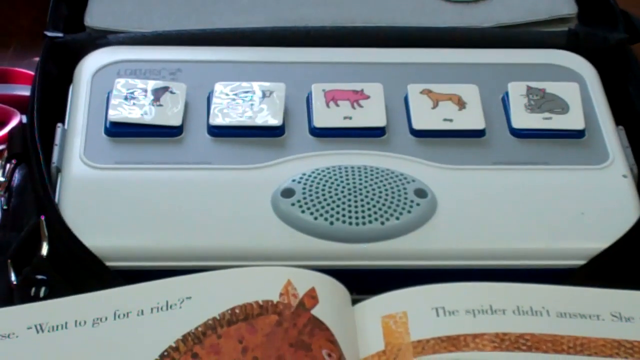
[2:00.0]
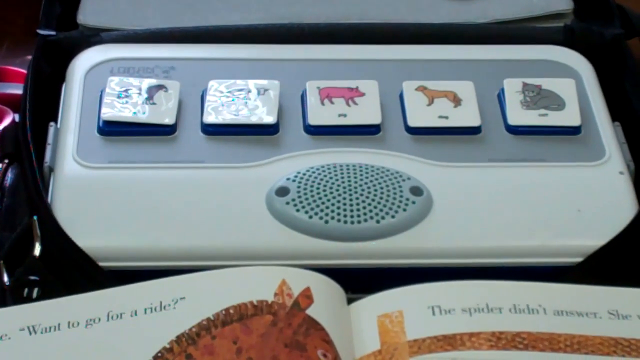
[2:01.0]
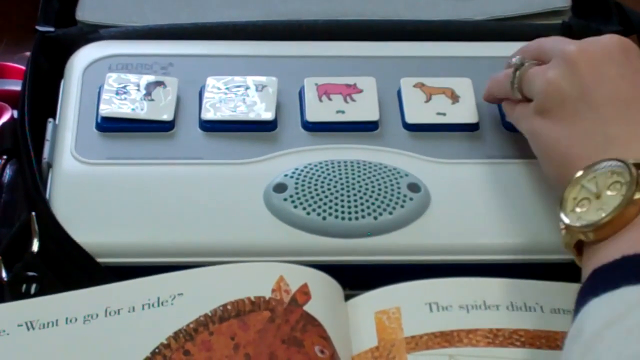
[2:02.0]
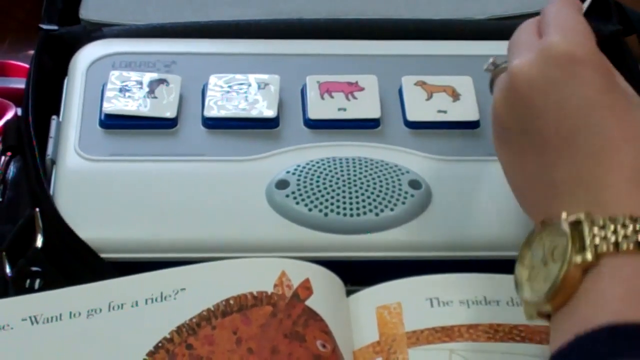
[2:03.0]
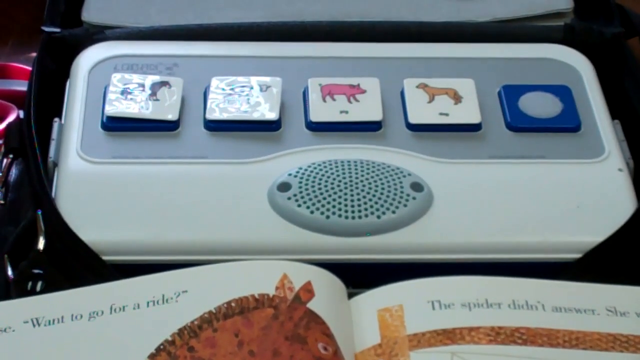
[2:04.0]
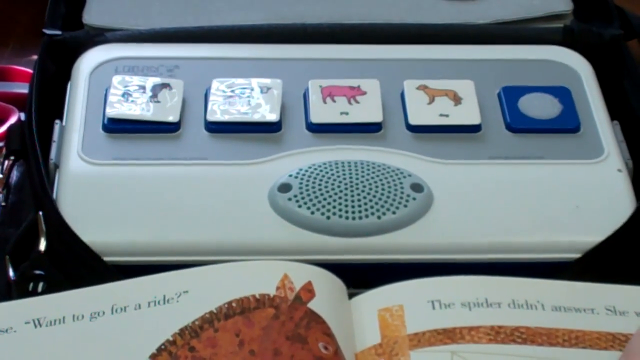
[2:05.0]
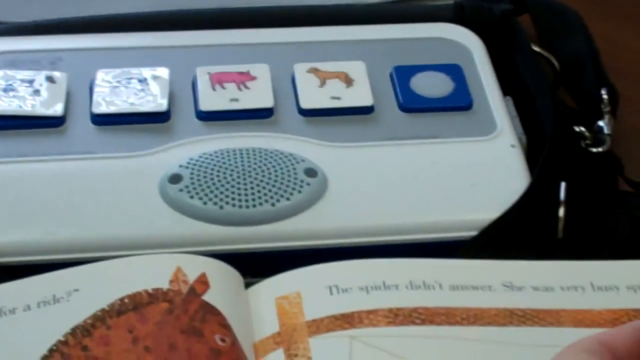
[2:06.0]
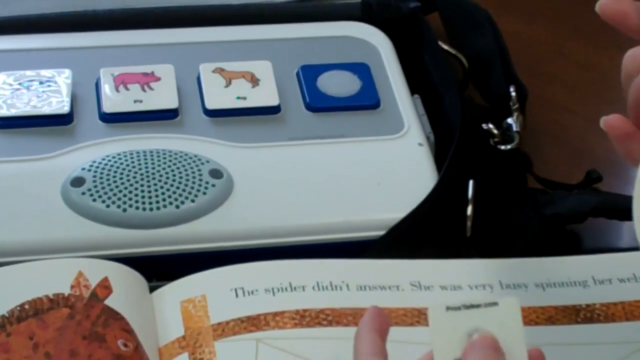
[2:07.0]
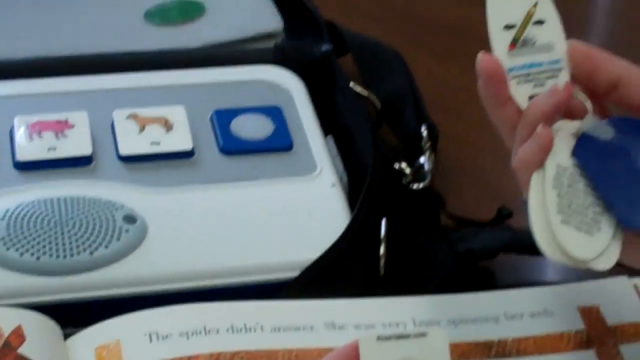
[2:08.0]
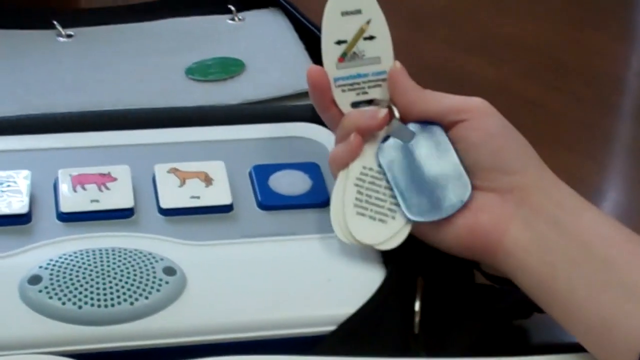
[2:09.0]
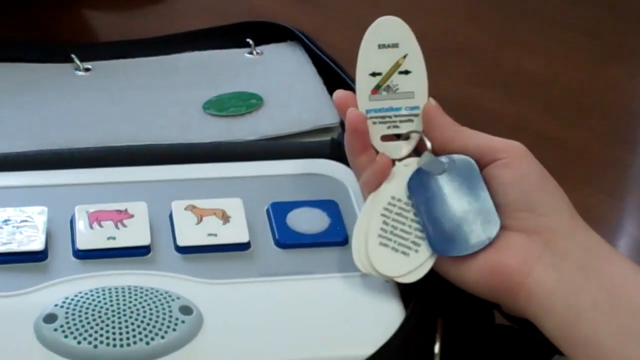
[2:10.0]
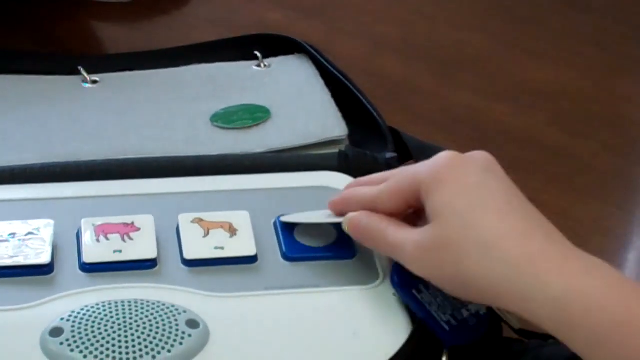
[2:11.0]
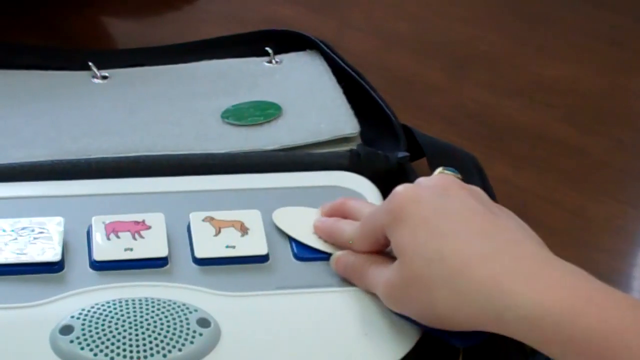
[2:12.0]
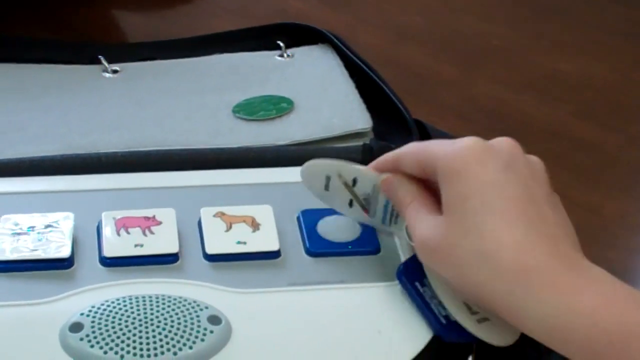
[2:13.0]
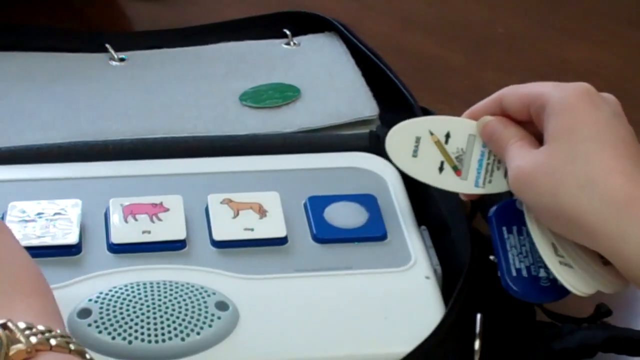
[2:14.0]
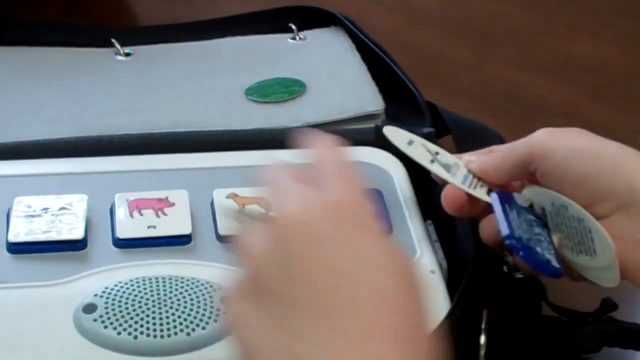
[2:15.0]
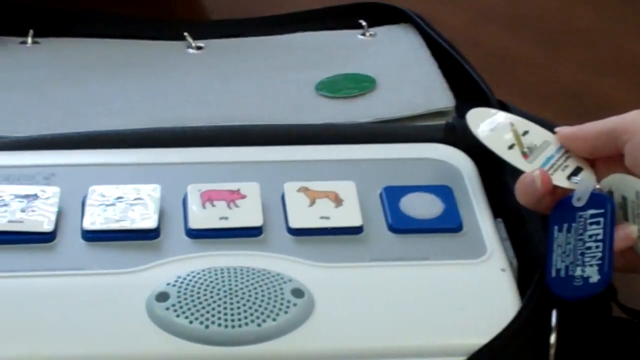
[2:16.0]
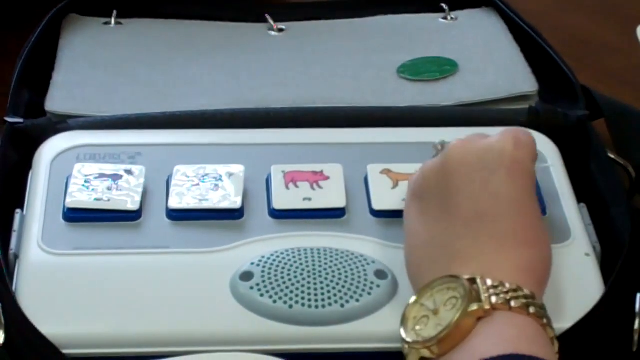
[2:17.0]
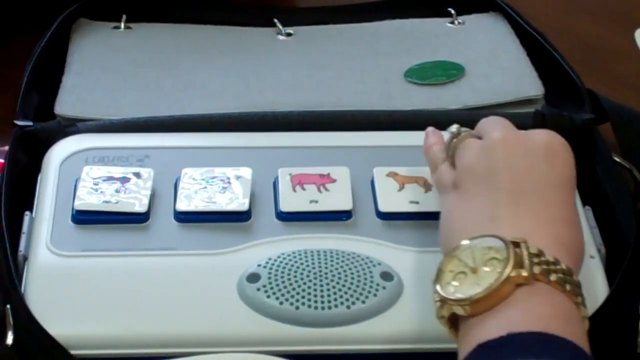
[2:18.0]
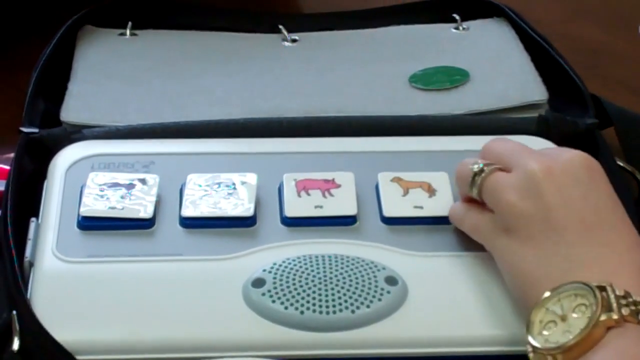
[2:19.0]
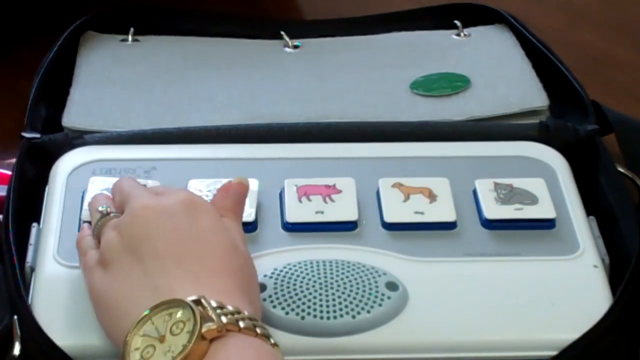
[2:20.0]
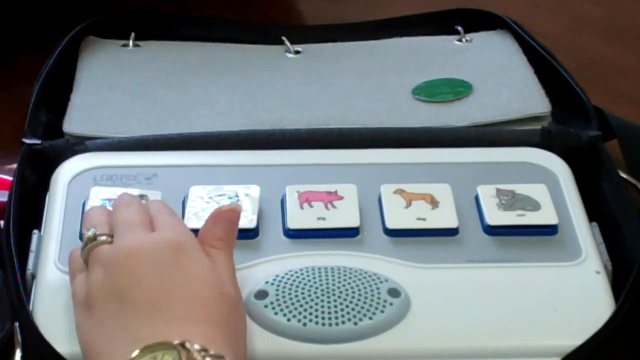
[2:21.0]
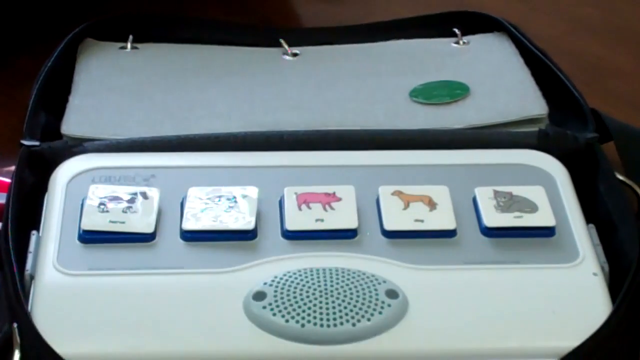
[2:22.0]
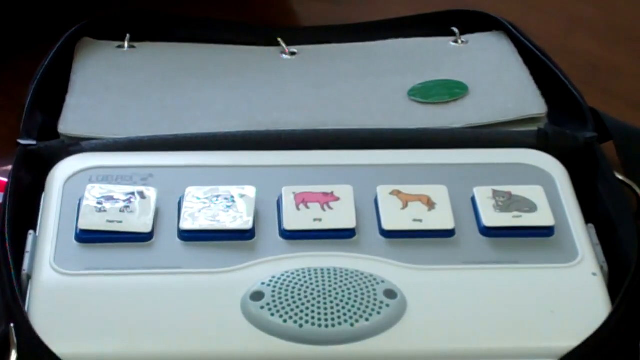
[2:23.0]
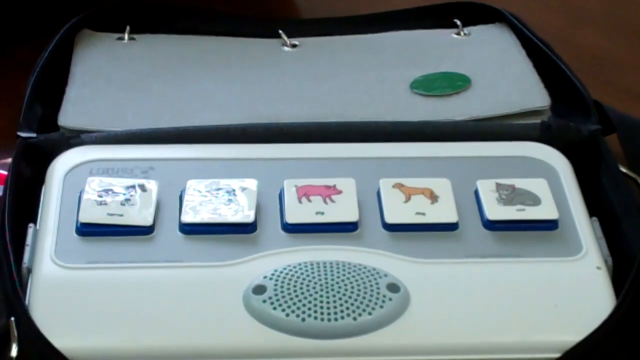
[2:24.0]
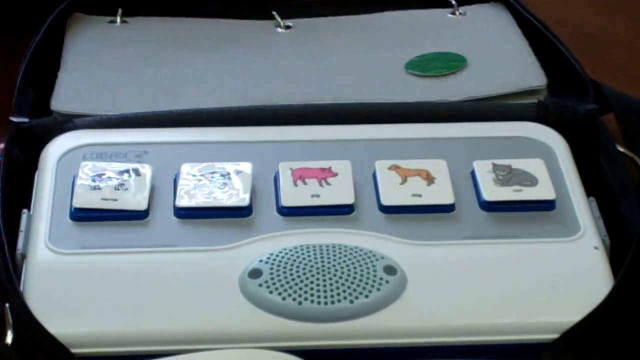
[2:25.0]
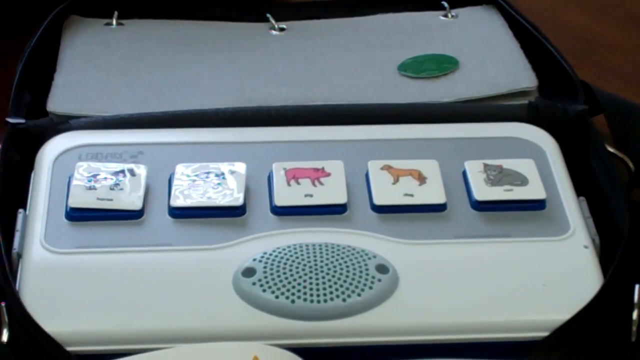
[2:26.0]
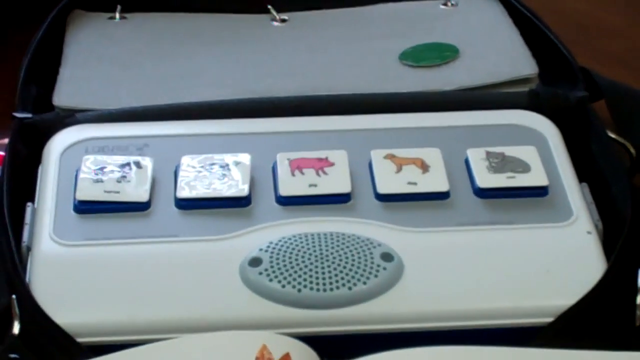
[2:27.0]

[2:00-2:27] The console has a light gray background with a darker gray rectangle across it. Arranged horizontally on the rectangle is a row of five square buttons with white backgrounds, each bearing the image of an animal: from left to right, a horse, something else, a pig, a dog and a cat. Below them is an oval speaker in a darker gray. The top of the open page of the Eric Carle book, the page with the horse, is visible. A woman's left hand comes into view on the right-hand side of the screen; she wears a diamond engagement ring and a large gold watch with a heavy ornate band. She removes the cat image from the last tab, holds up a key card and shows it to the camera, then presses it on top of the blue and white button where the card was. With her left hand she replaces the image of the cat, then presses the image of the horse on the far left-hand side of the screen several times and removes her hand.